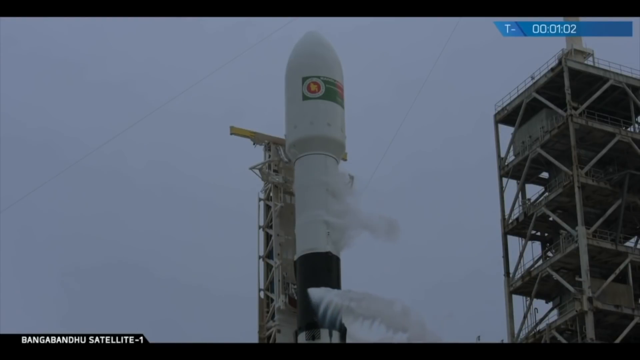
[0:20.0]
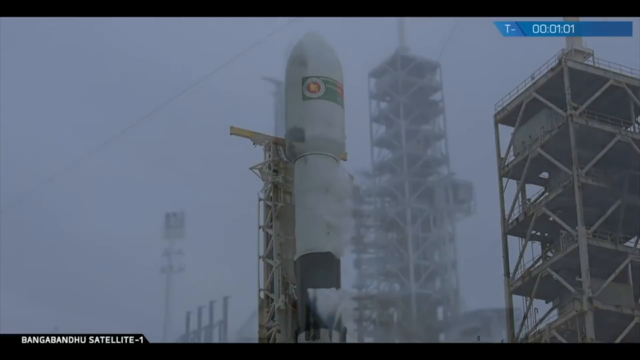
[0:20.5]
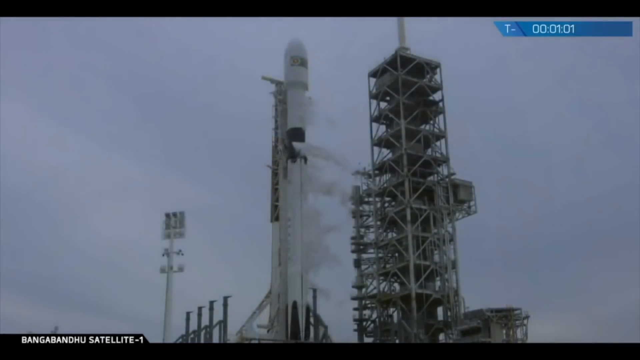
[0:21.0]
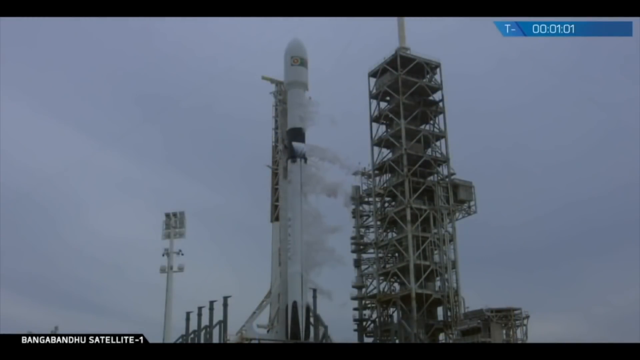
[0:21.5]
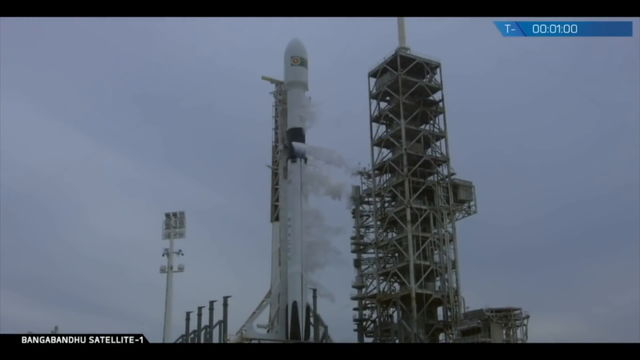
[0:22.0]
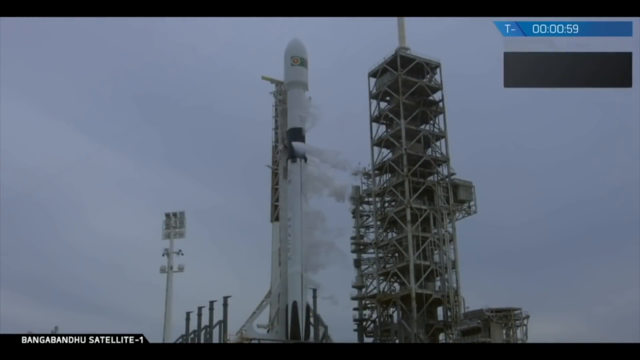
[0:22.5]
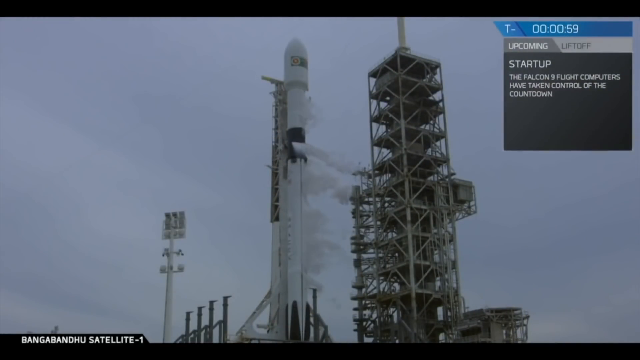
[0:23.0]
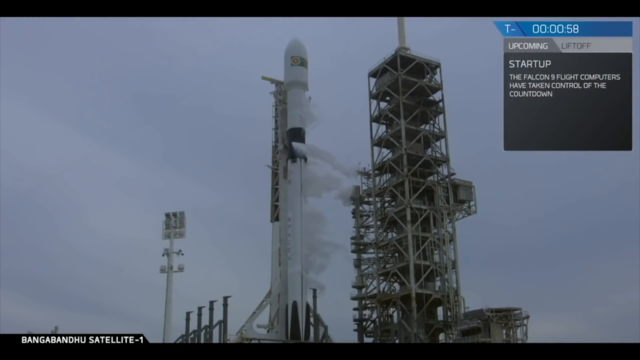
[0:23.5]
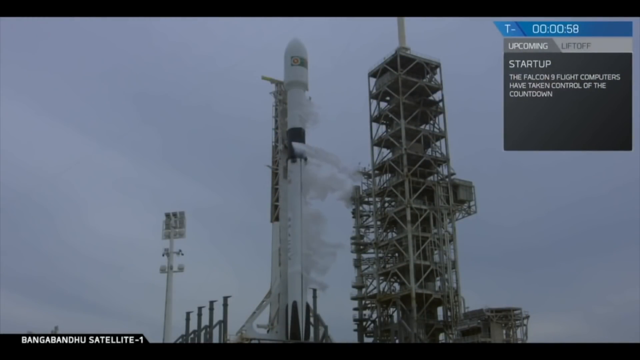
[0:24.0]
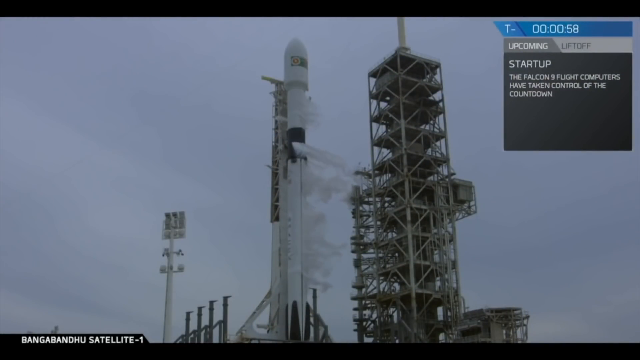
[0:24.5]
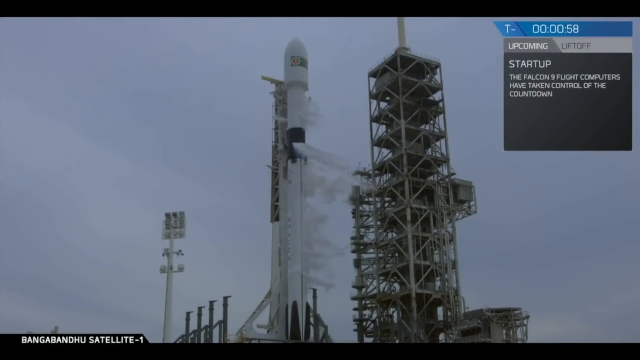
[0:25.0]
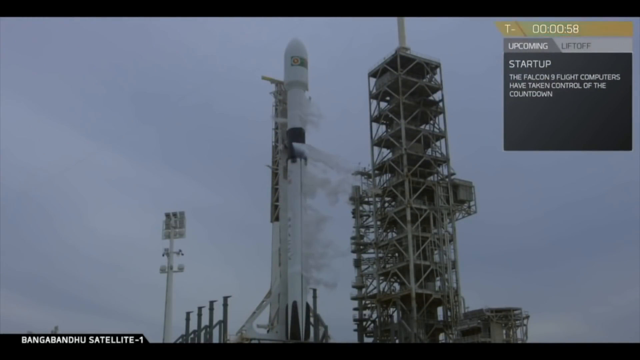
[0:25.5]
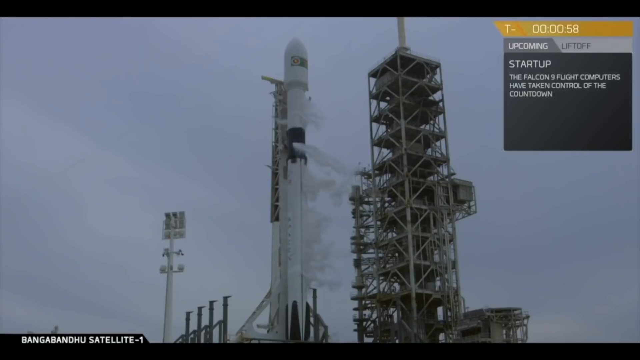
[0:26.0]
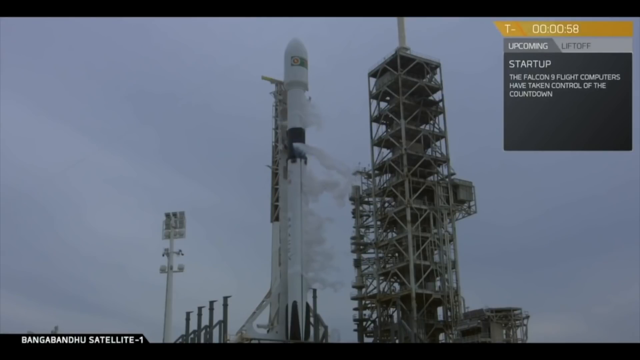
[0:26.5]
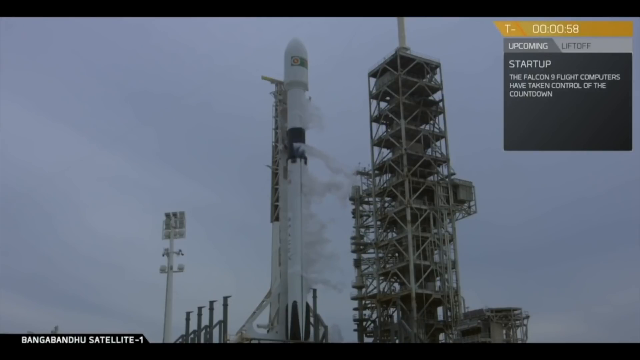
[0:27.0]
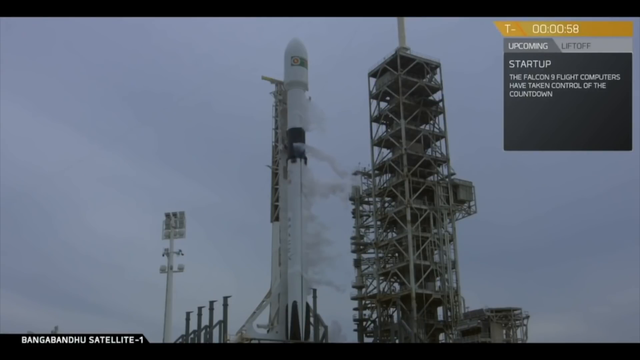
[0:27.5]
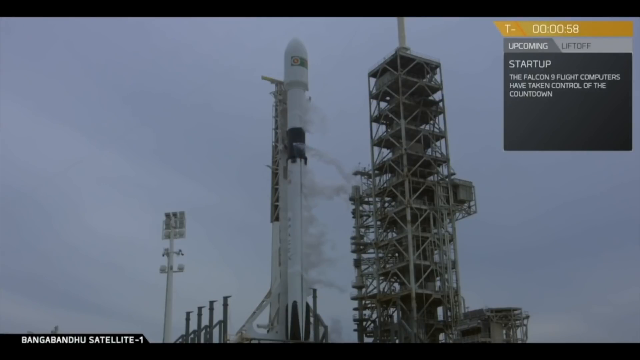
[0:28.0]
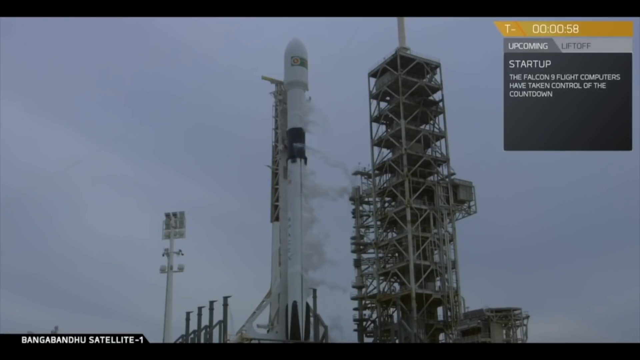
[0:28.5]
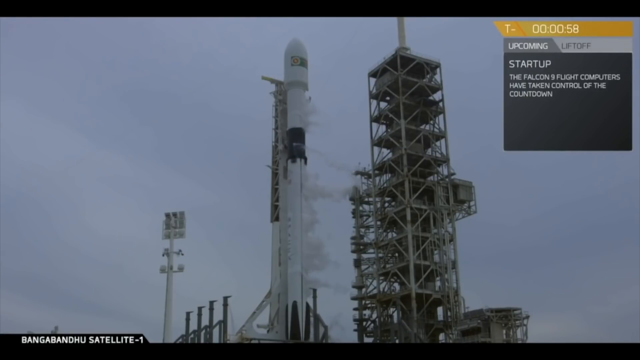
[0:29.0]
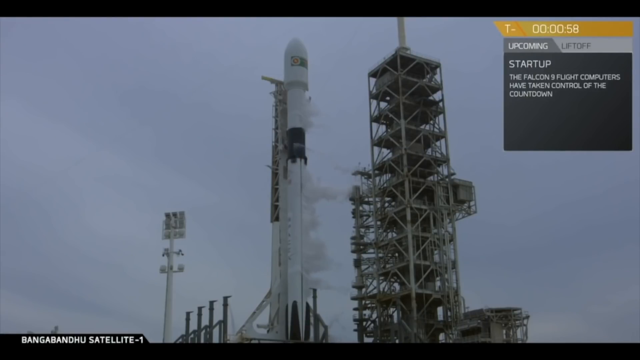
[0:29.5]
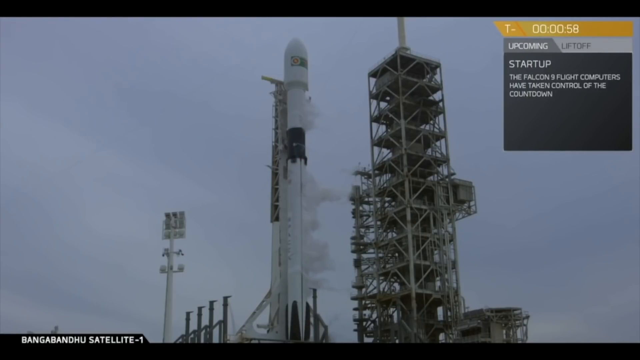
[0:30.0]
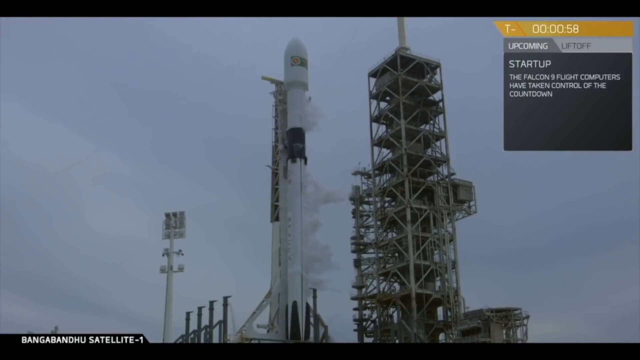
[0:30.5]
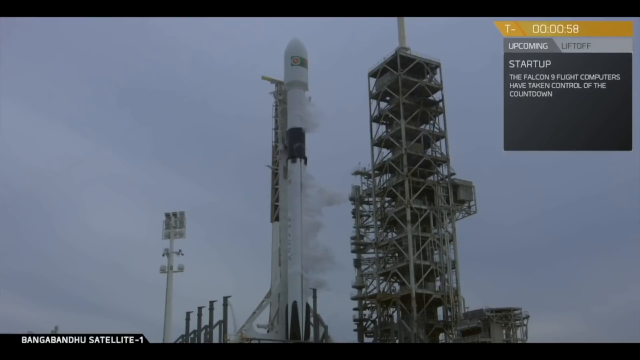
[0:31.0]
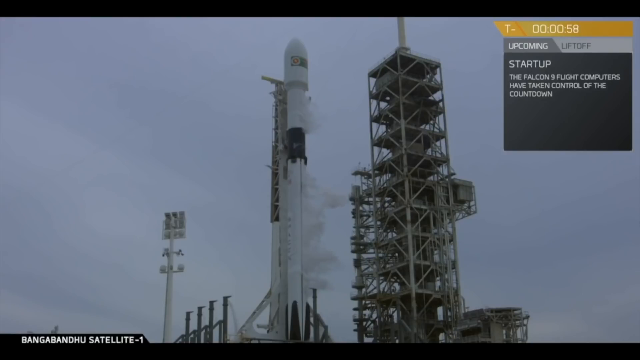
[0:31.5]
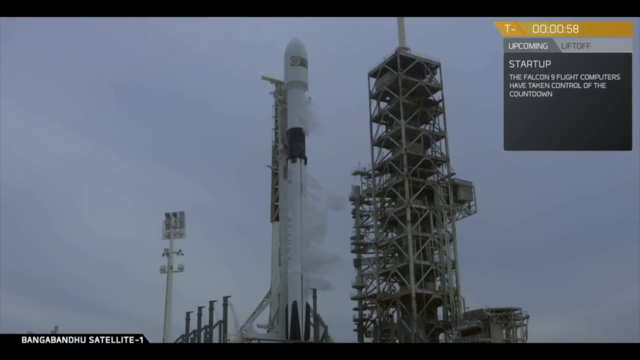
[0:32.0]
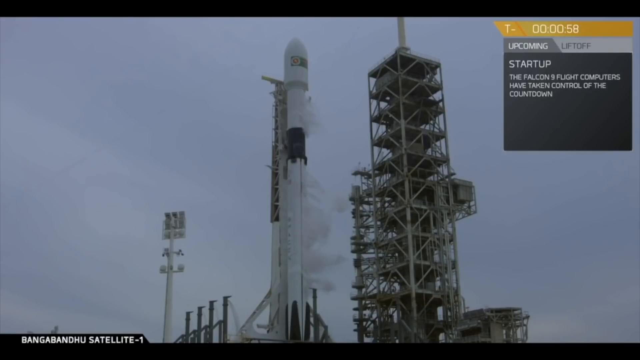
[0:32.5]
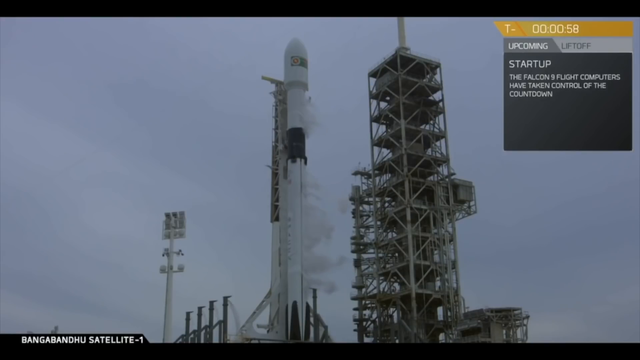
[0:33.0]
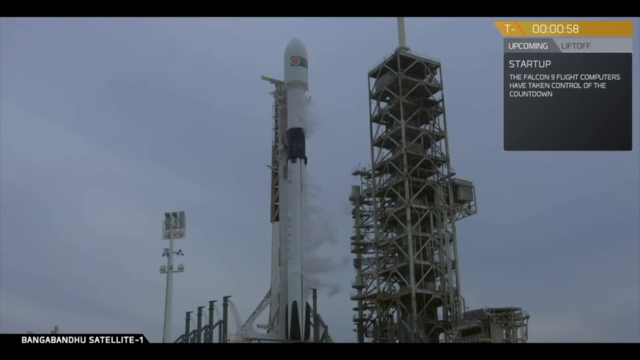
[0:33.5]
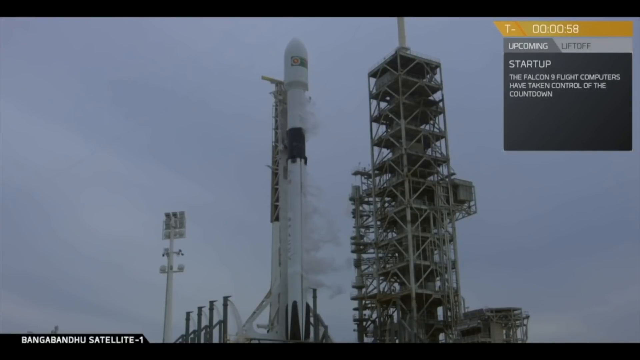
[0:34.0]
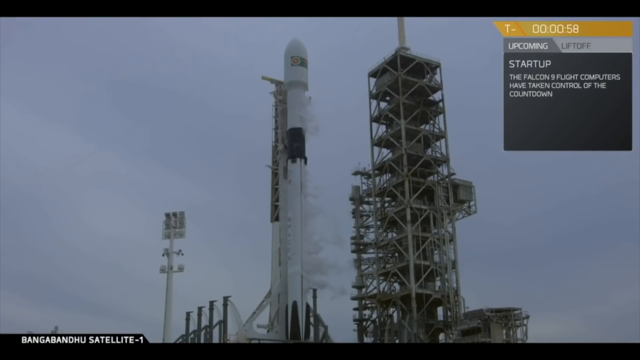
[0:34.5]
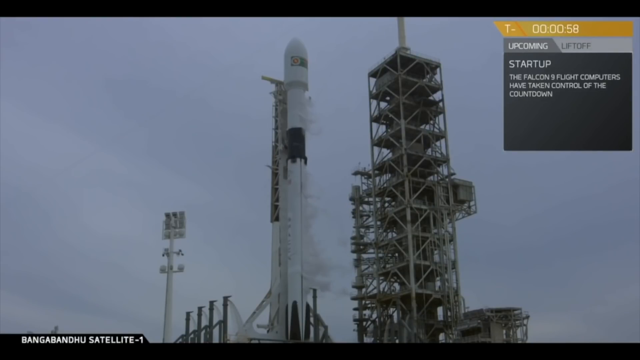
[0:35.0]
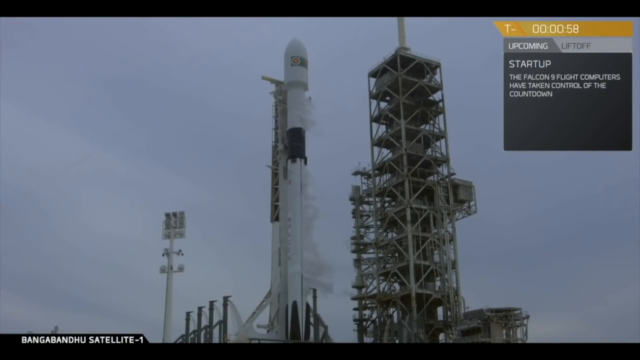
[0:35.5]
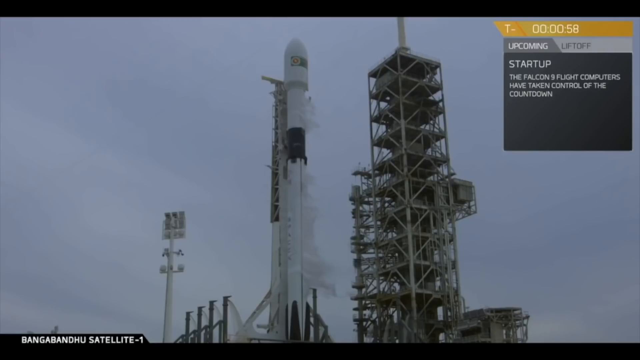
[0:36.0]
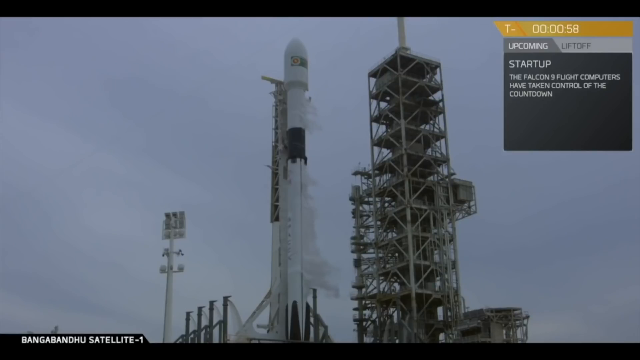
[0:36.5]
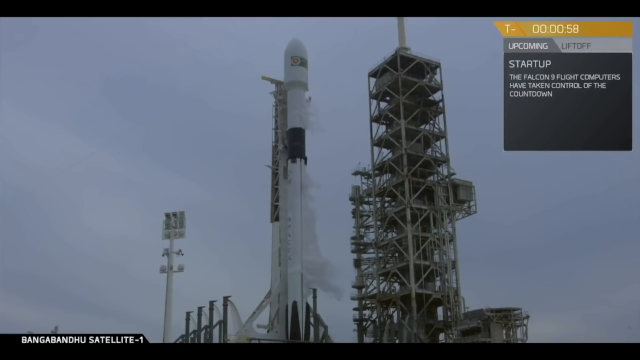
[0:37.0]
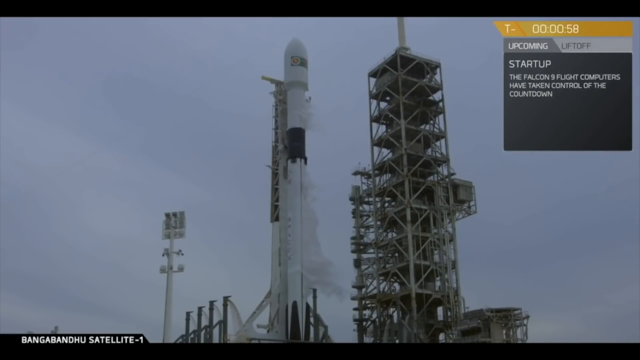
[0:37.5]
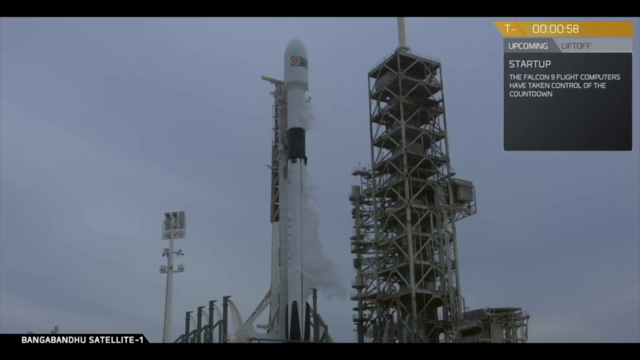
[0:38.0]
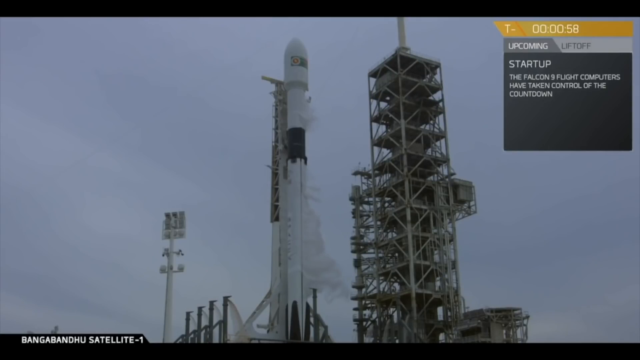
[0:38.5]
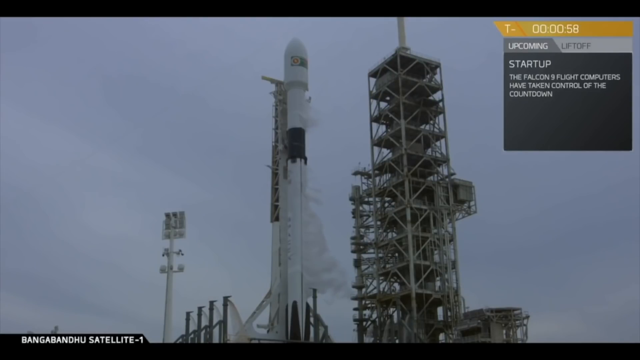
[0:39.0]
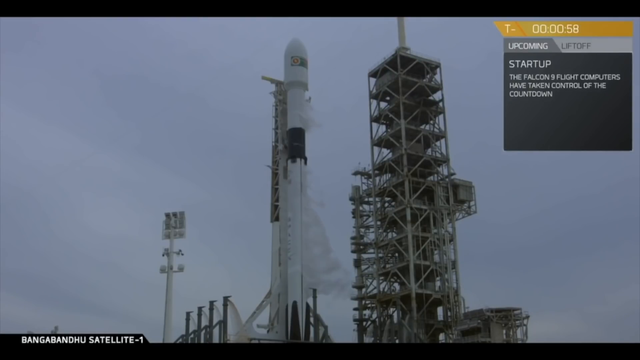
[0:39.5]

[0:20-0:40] A drone attached to a laptop is shown with a lot of smoke coming from it, and on the other side of the drone there is a very long tower. Text in the top right corner reads "start up the Falcon flight computers have taken control of the countdown." Smoke keeps coming out of the drone flight, which is white and points upward. The tower is in a clear place with no houses around, and the sky is very clear.